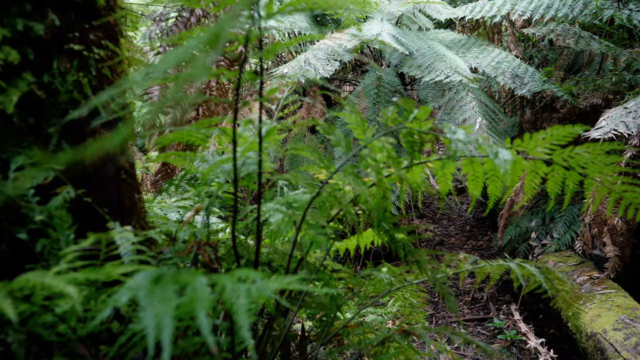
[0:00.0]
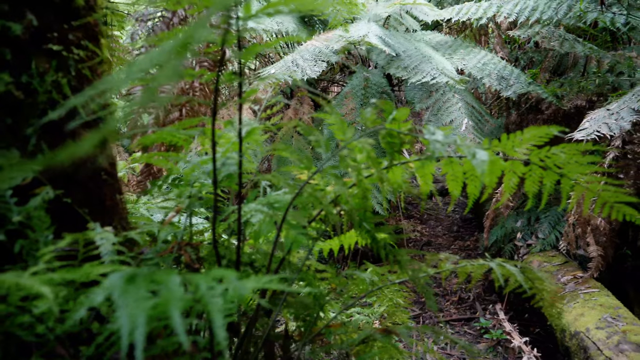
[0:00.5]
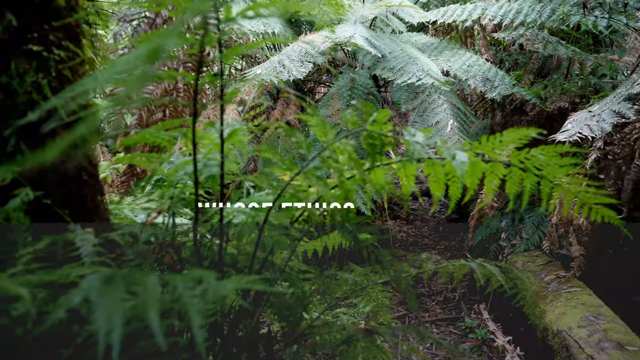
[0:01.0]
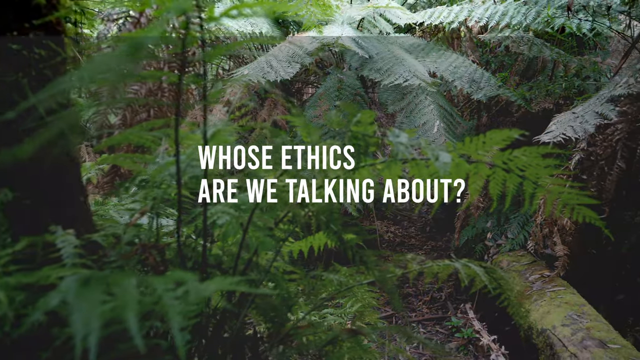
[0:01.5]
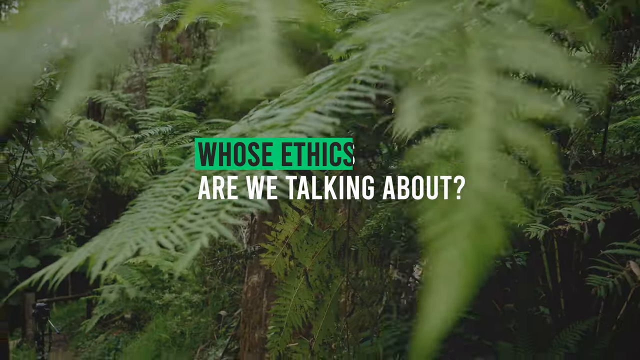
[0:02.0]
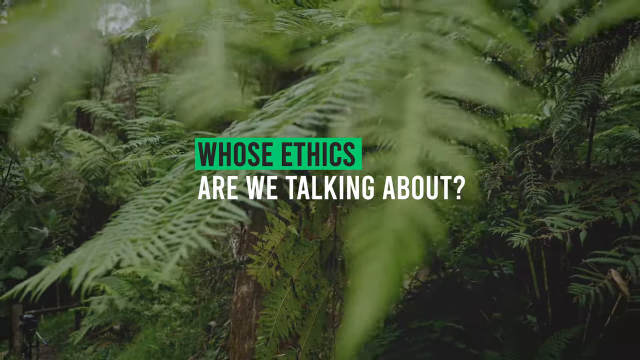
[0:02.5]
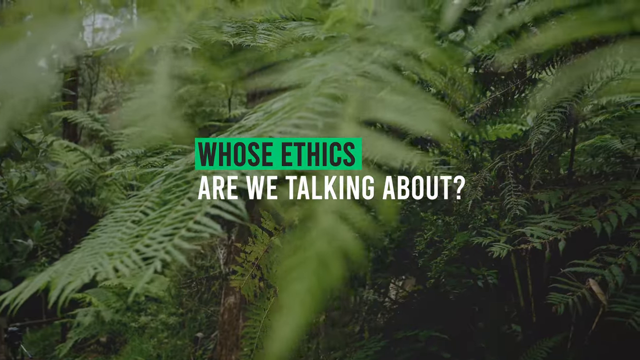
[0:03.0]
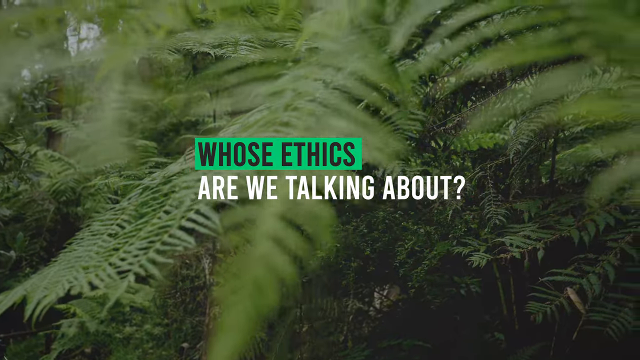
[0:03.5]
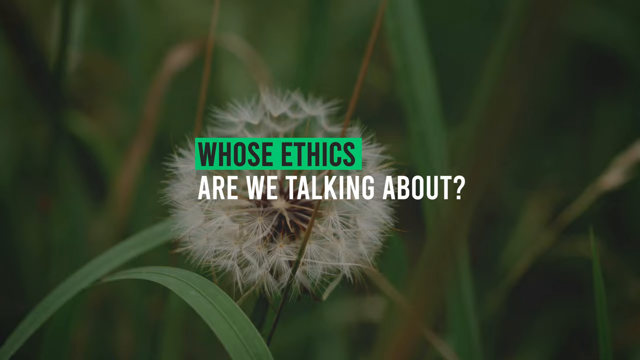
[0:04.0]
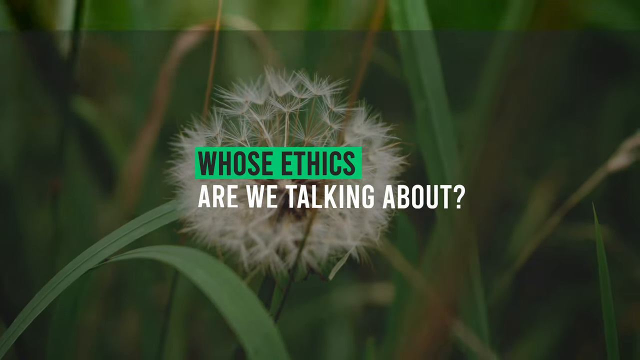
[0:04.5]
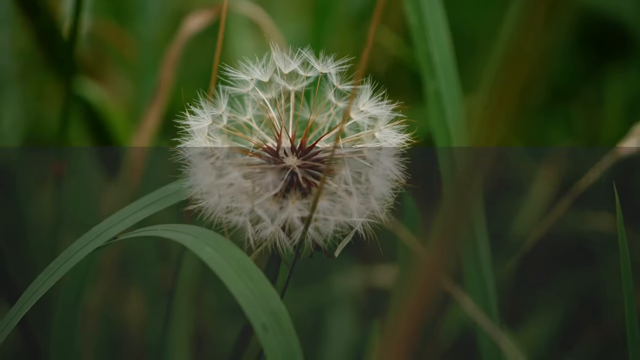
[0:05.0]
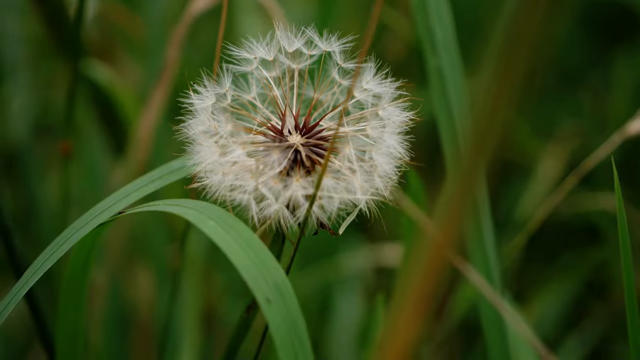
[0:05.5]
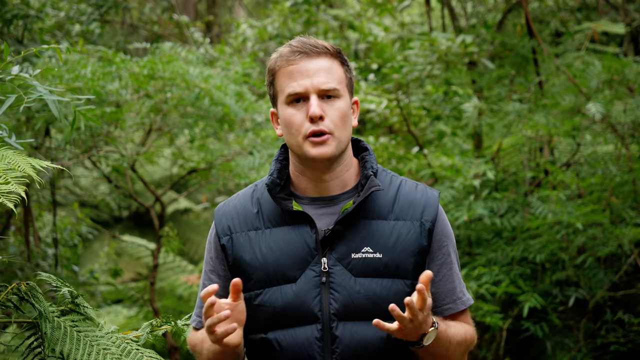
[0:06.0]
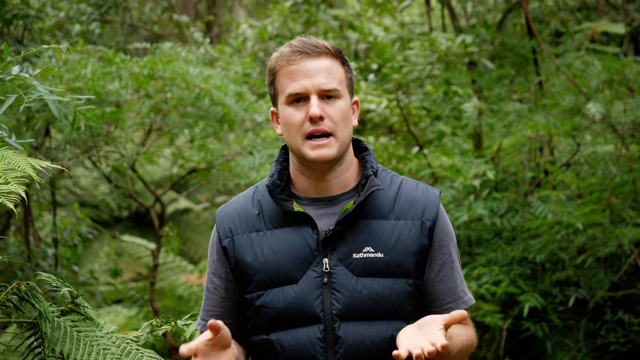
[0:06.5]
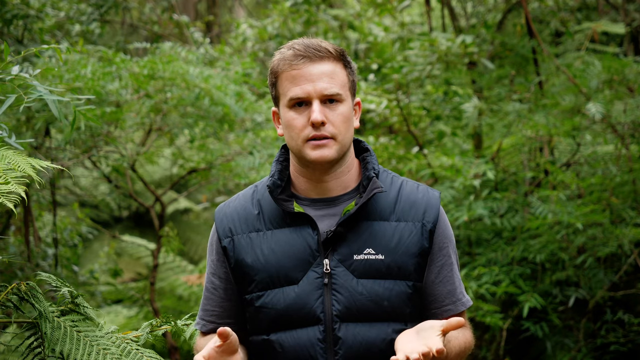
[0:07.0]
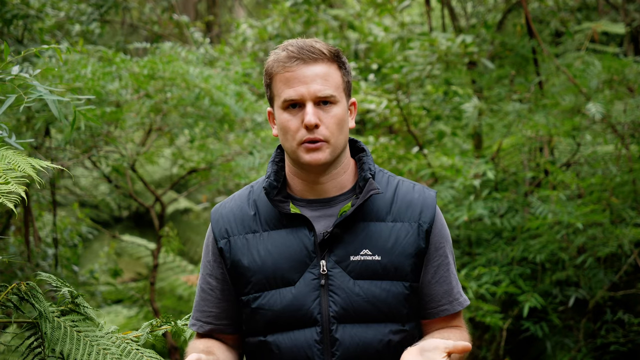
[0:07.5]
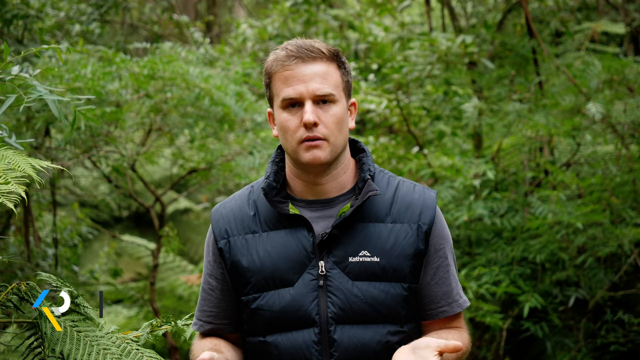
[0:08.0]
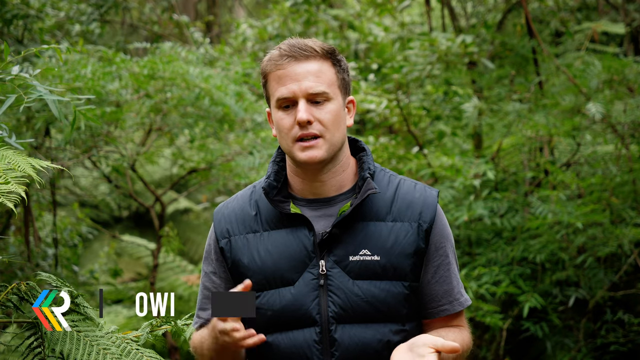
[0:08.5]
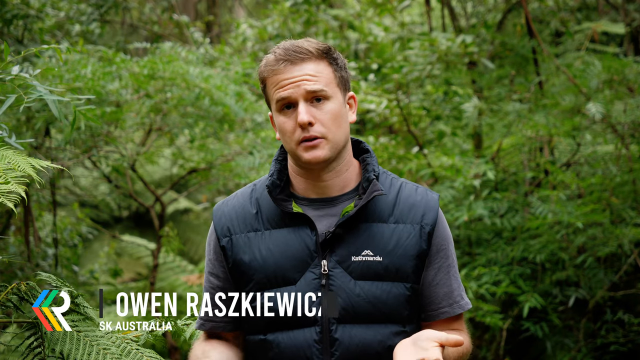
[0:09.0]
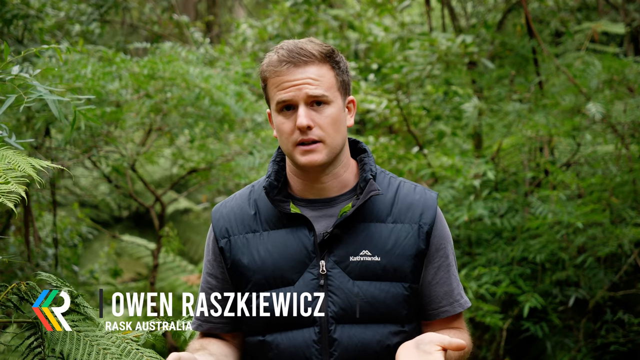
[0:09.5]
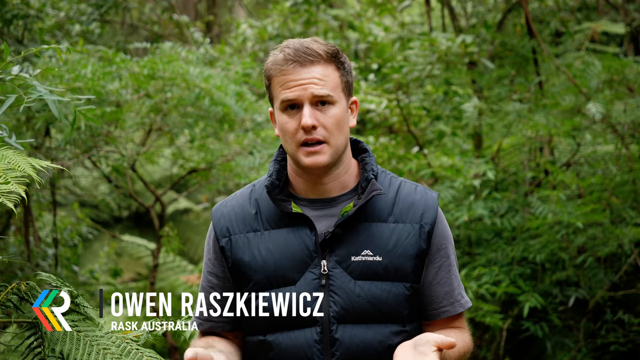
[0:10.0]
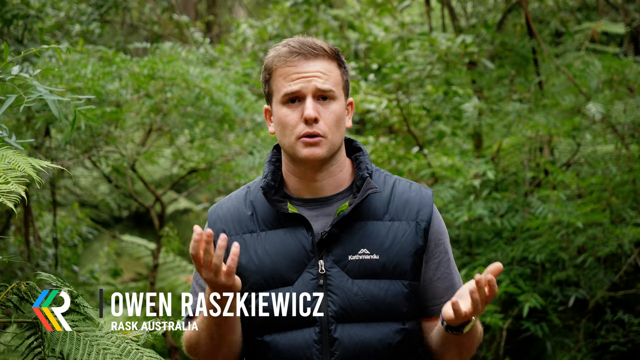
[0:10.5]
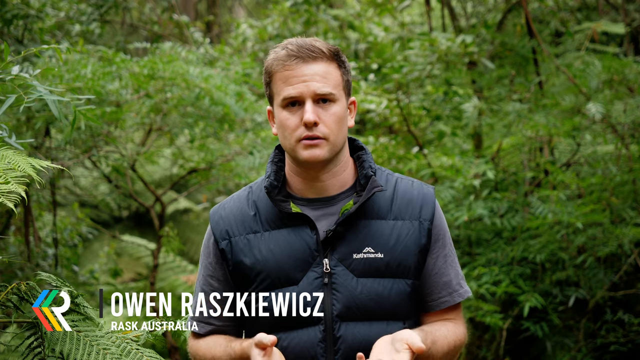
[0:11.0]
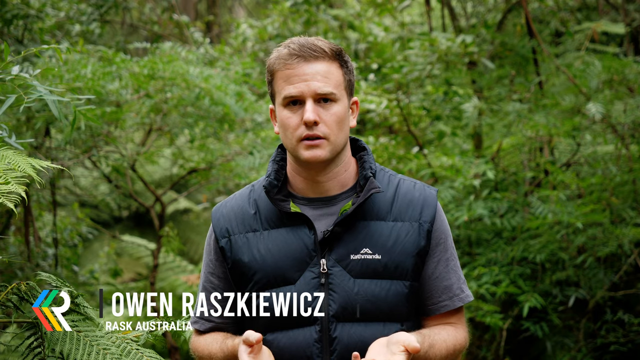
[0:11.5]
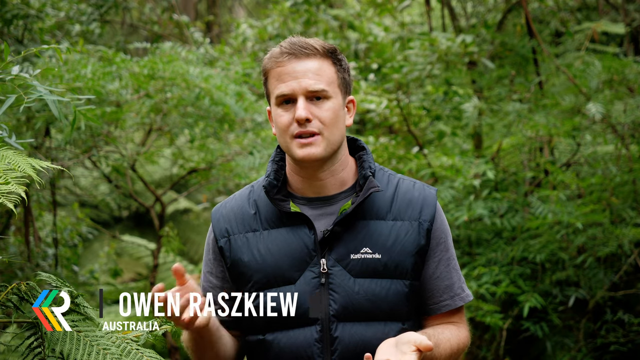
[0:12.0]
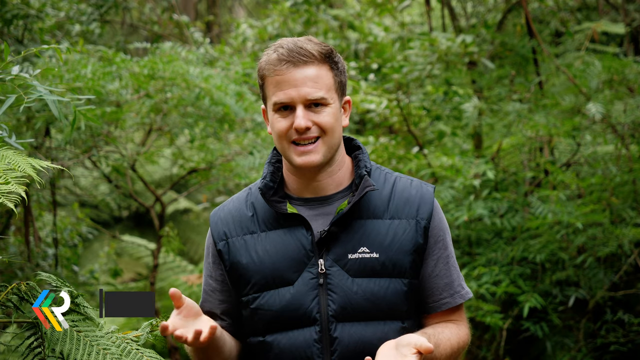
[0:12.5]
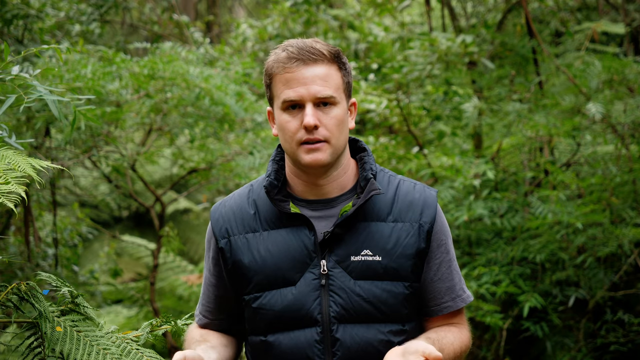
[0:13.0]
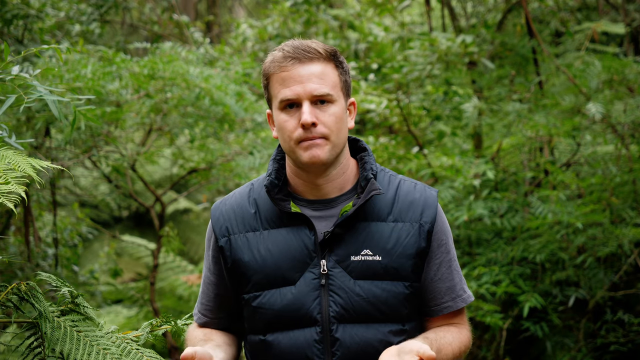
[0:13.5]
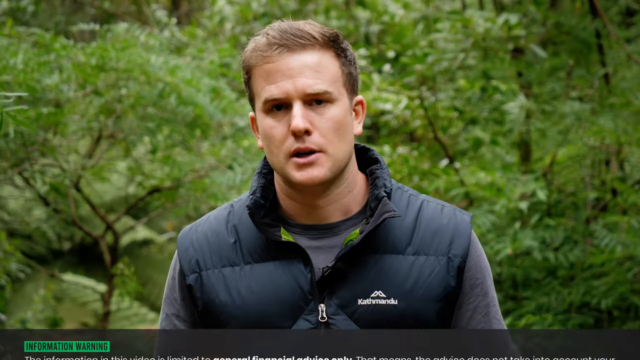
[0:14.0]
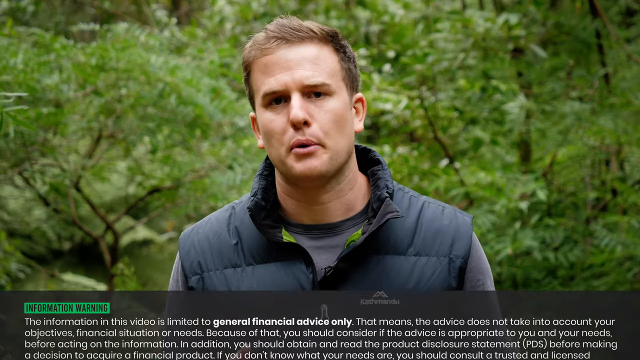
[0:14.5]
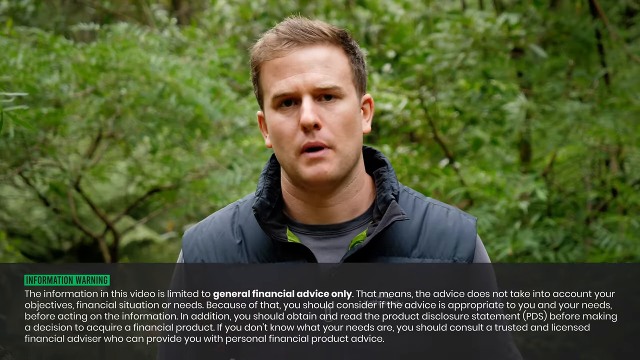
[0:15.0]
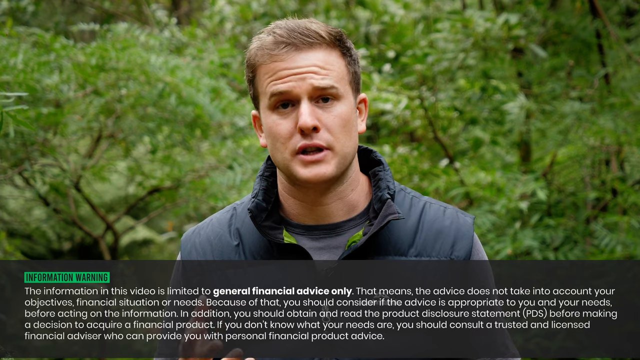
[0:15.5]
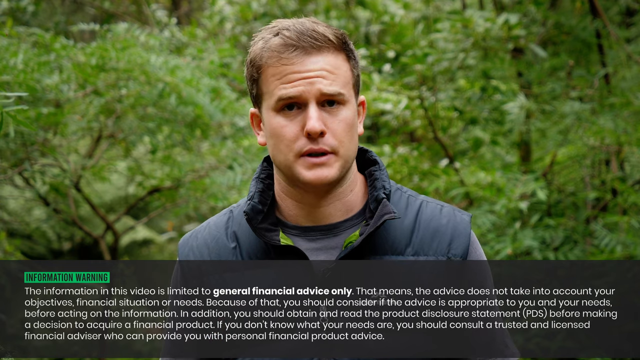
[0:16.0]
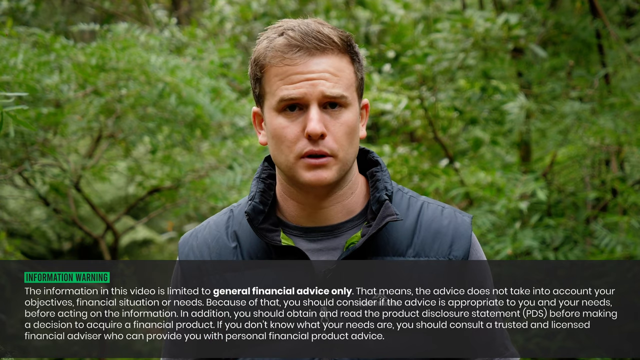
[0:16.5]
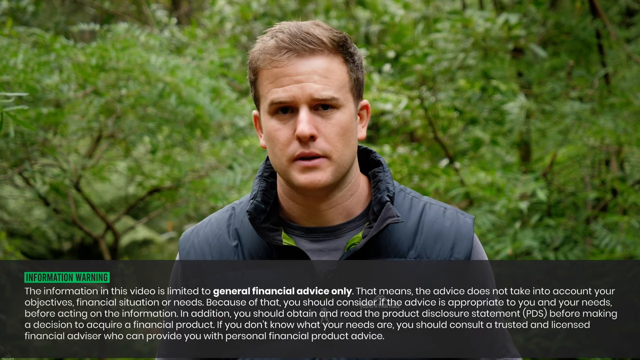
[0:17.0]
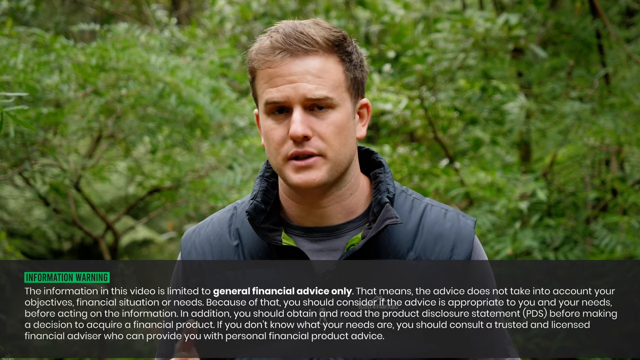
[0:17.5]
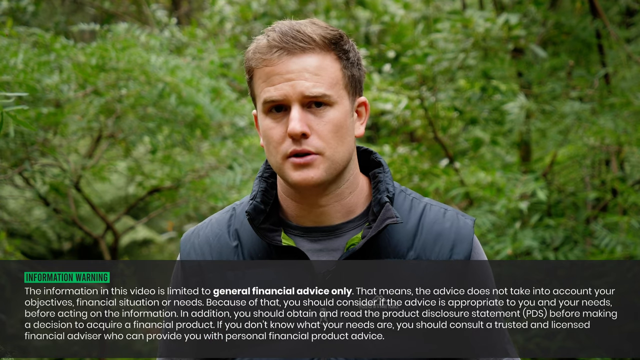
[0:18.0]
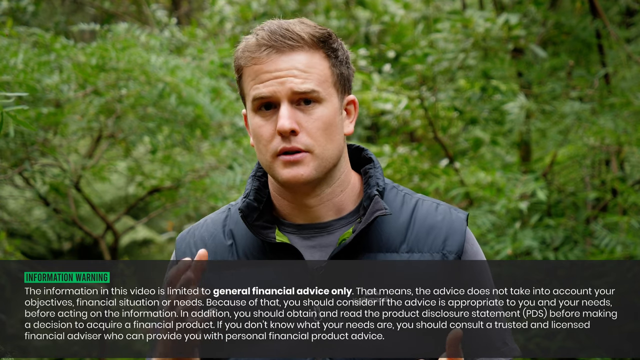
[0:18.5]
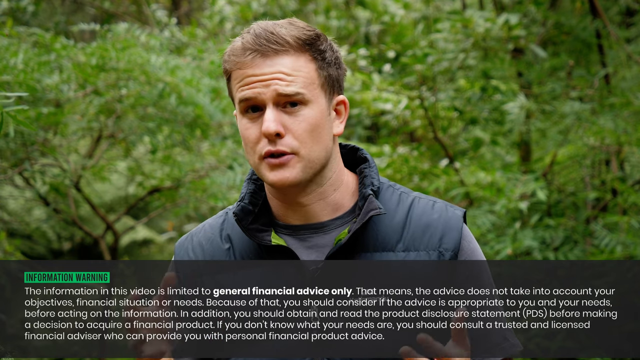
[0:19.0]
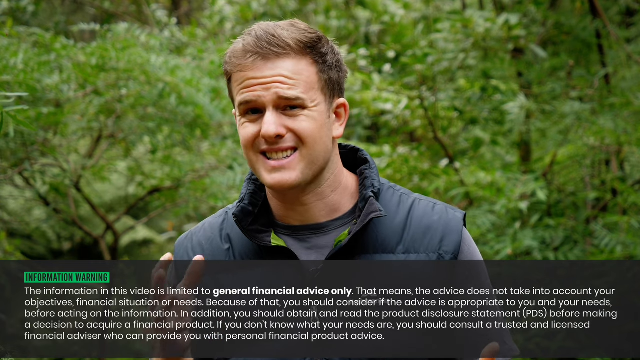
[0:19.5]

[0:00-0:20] An image of farmland with a lot of trees fills the screen, and the on-screen text reads "whose ethics are we talking about?", with "whose ethics" in green and the question mark in white. Among the many trees and flowers, a man appears; his name is Owen Rogers-Quill. He is speaking, wearing a little jacket, and has short hair. He gestures with his hand, with lots of trees behind him; it looks like he is in the bush, and he may be a forest man. He uses his hands to demonstrate and is passionate about what he is explaining. A warning is also on the screen: "The information in this video is limited to the general financial advice only," followed by a note that the advice does not take into account financial situations or needs. It is a general disclaimer.